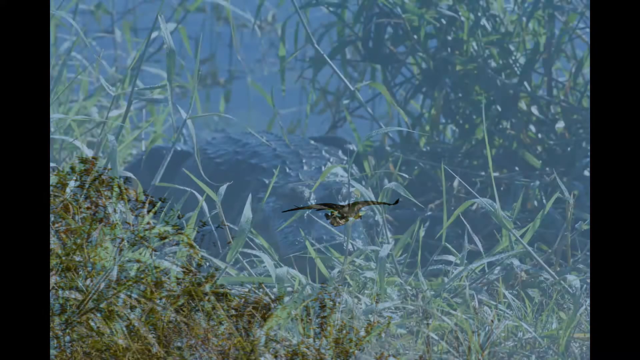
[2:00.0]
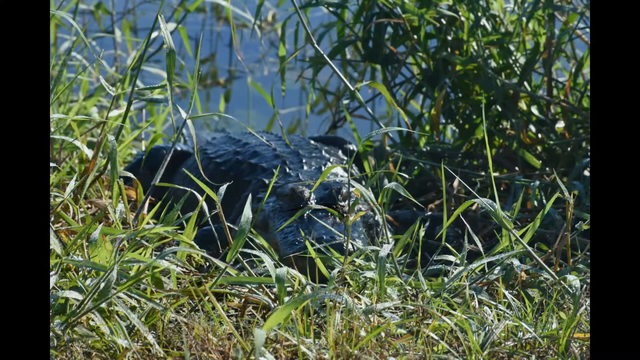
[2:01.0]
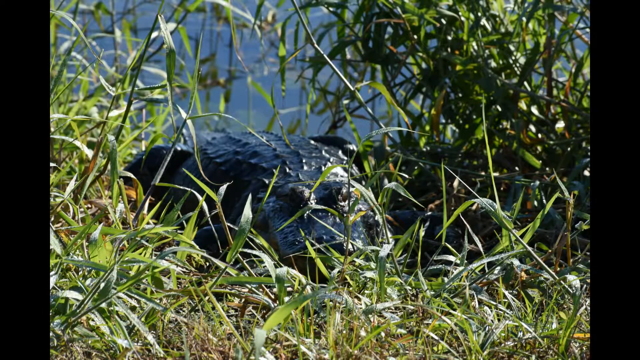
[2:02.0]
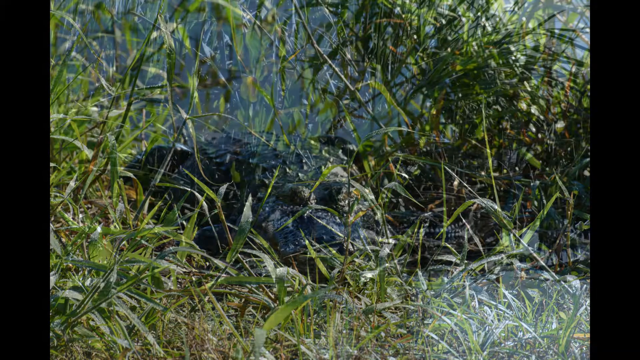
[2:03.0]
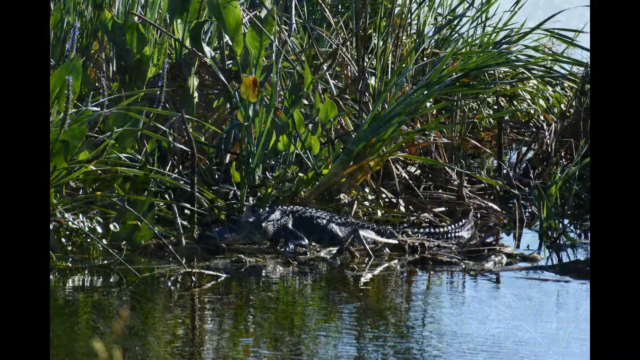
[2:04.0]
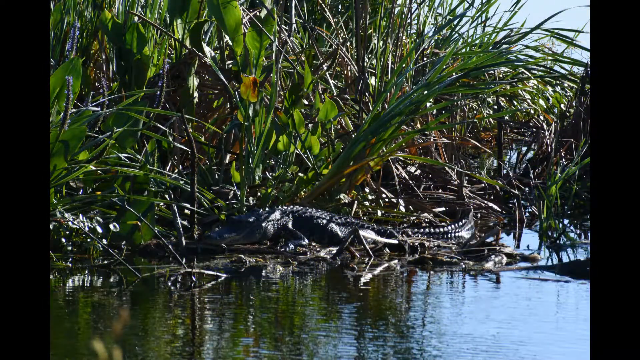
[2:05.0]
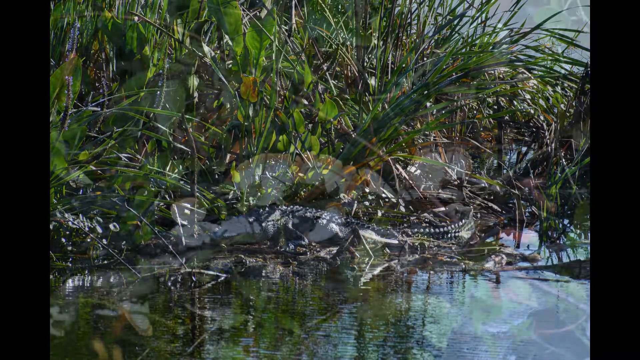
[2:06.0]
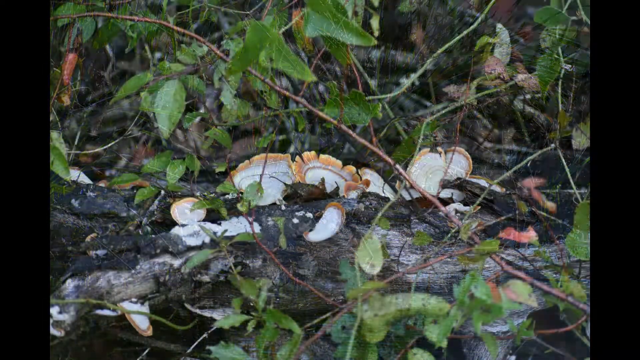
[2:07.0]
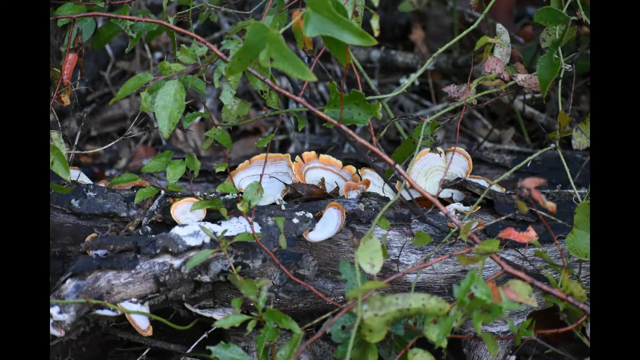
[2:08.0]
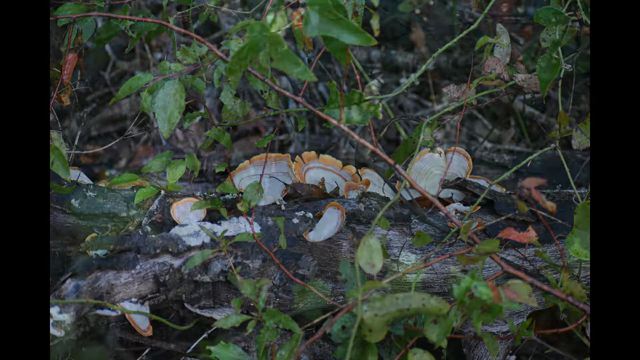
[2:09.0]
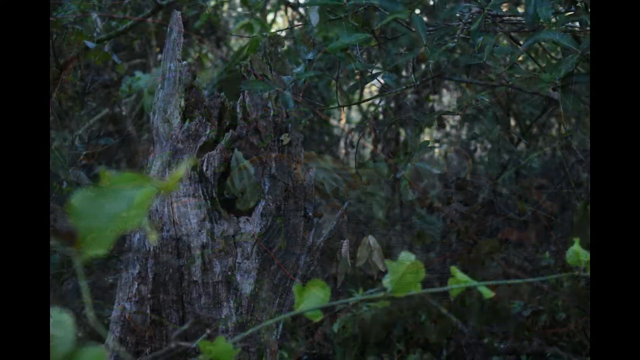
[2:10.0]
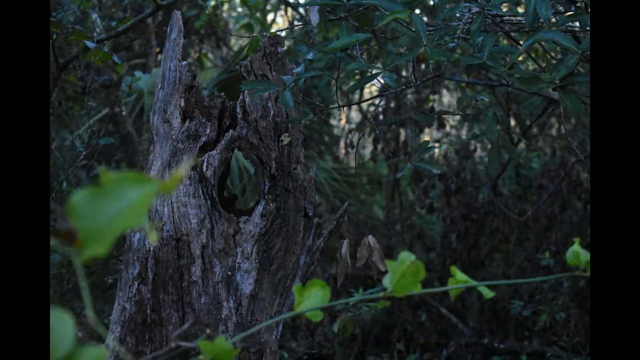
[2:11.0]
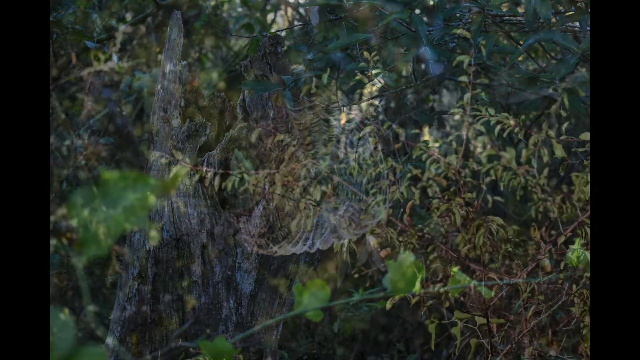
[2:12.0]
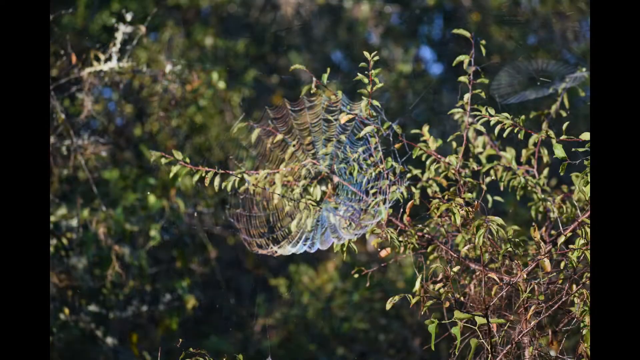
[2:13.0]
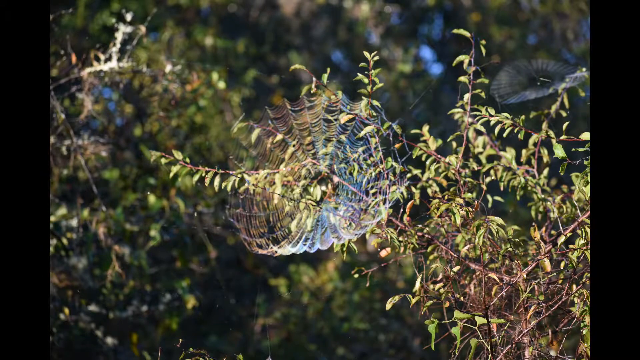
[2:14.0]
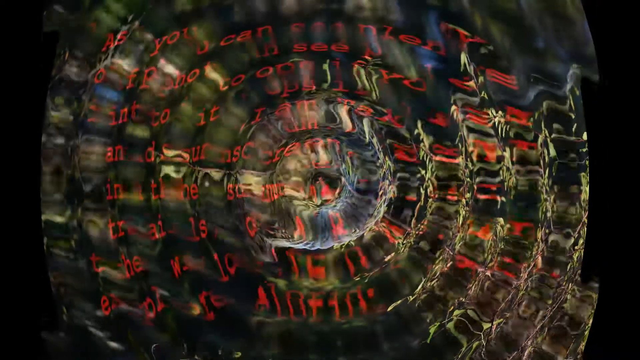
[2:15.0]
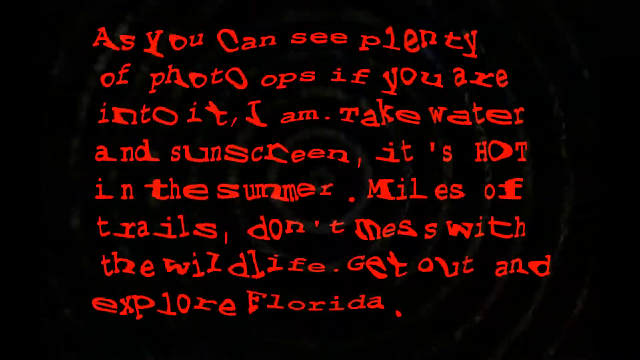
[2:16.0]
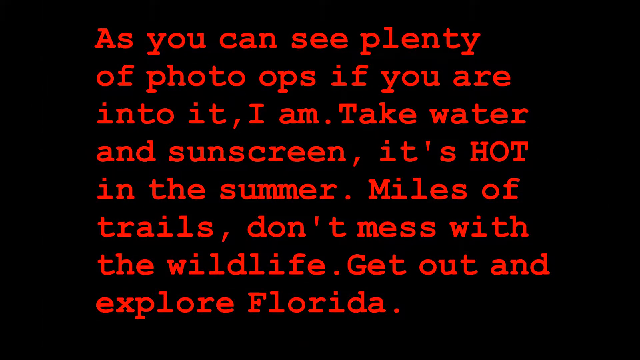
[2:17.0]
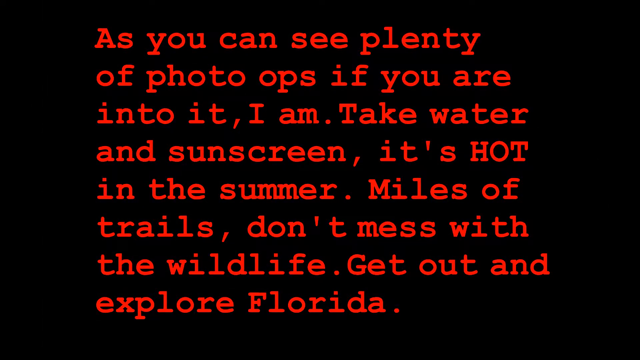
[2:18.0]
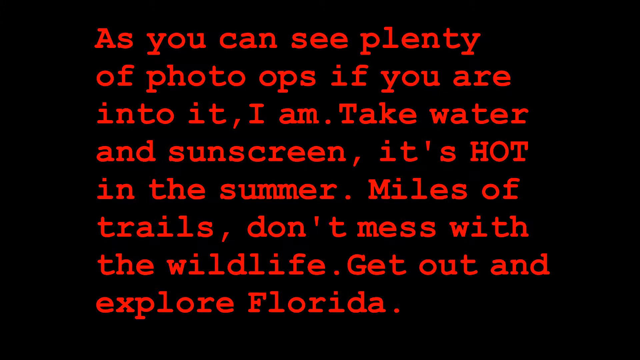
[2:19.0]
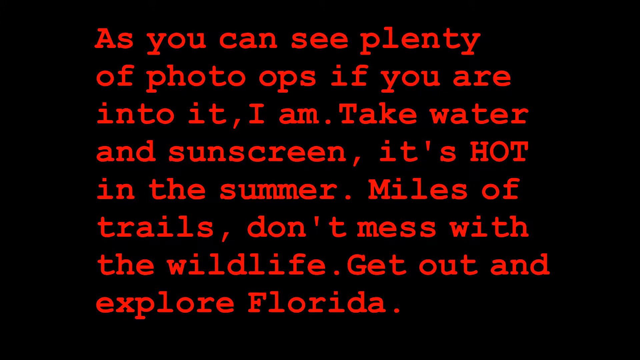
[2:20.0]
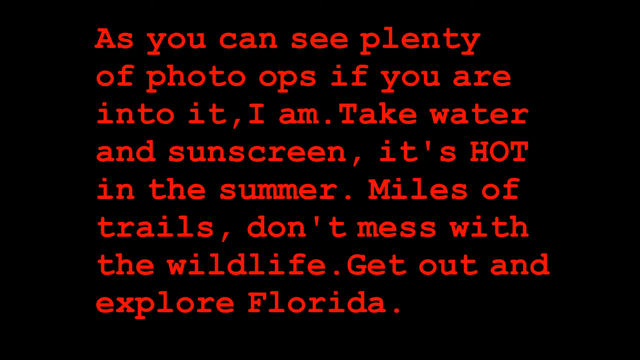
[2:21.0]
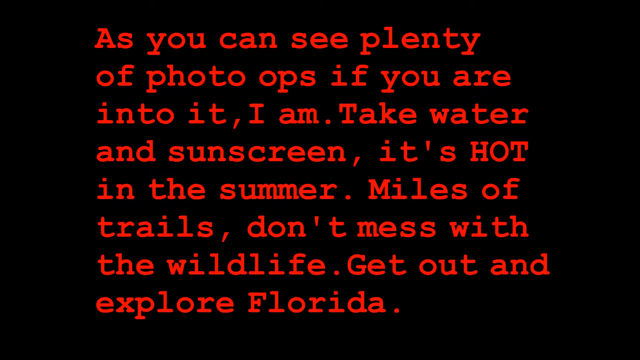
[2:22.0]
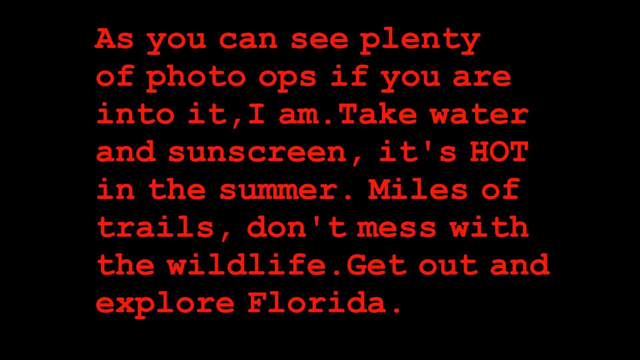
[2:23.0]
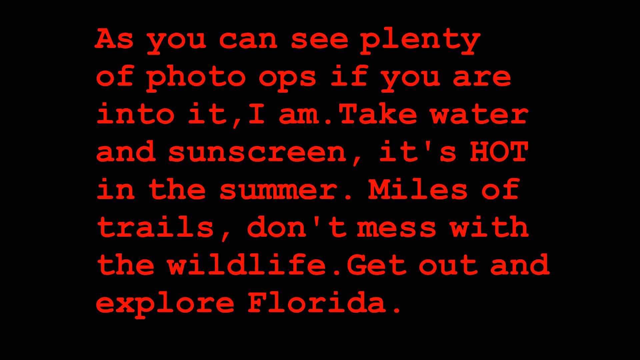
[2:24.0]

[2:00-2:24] The slideshow continues. First is an alligator or crocodile in a marshy environment with blue water and green grasses around its body. Next, an alligator or crocodile lurks near the edge of the water with greenery all around. A closer-up photo shows several mushrooms growing out of the bark of a tree, with green leaves and brown sticks. Next is a forest with many yellow leaves, then a very symmetrical spider web with light hitting it. A ripple effect follows, and red text appears against a black background: "as you can see, plenty of photo ops if you are into it, I am. Take water and sunscreen, it's hot in the summer. Miles of trails, don't mess with the wildlife. Get out and explore Florida."